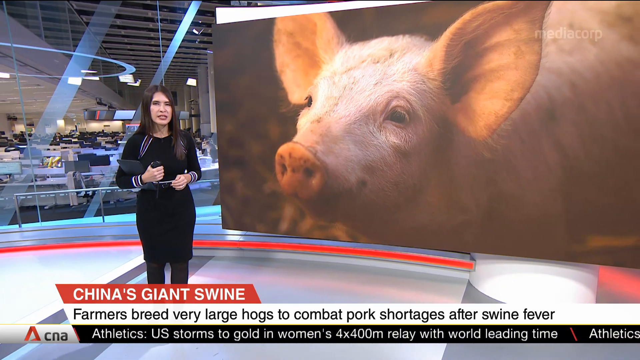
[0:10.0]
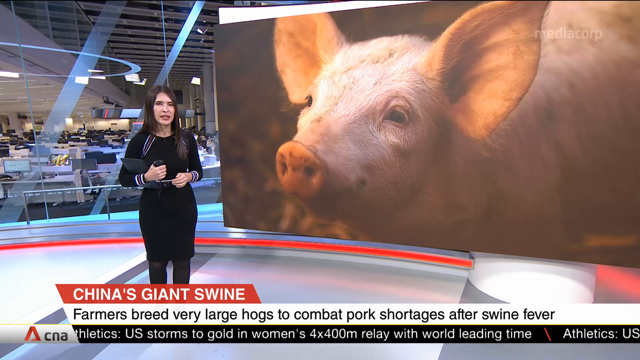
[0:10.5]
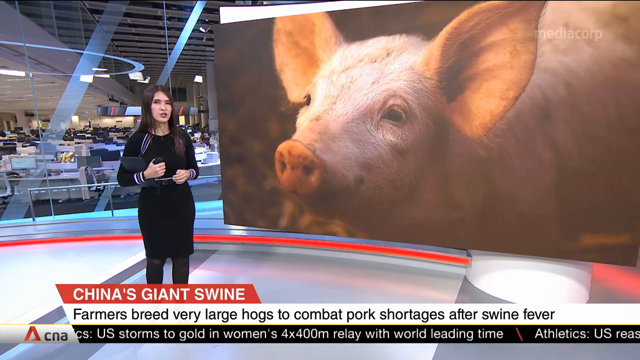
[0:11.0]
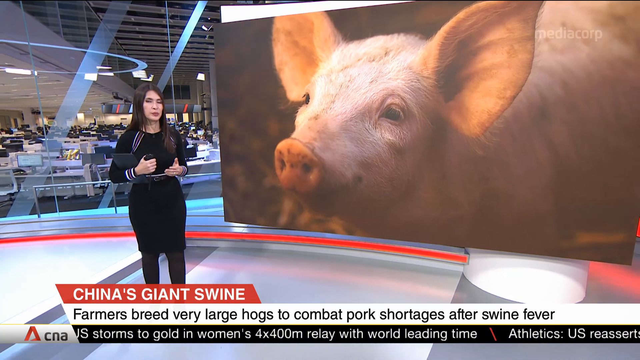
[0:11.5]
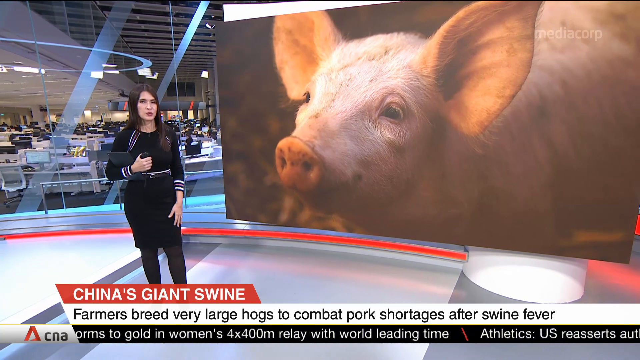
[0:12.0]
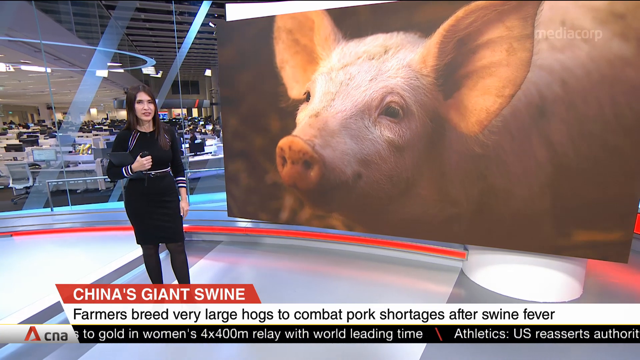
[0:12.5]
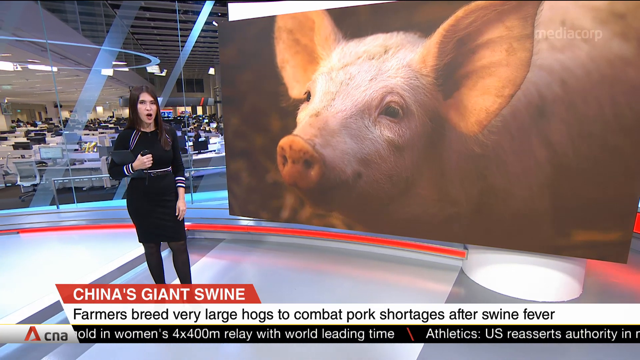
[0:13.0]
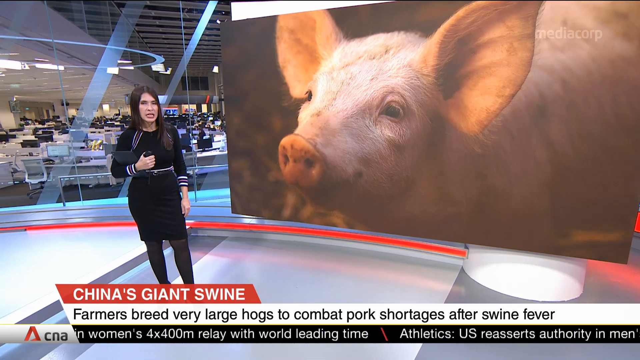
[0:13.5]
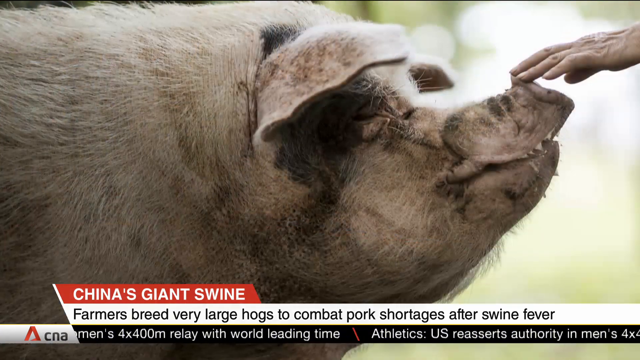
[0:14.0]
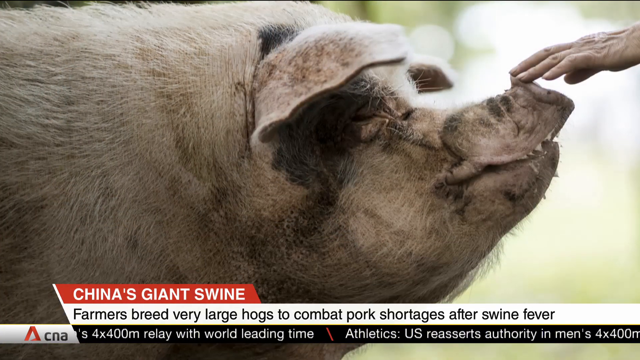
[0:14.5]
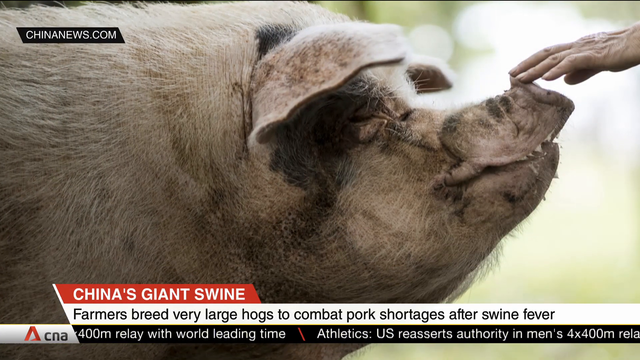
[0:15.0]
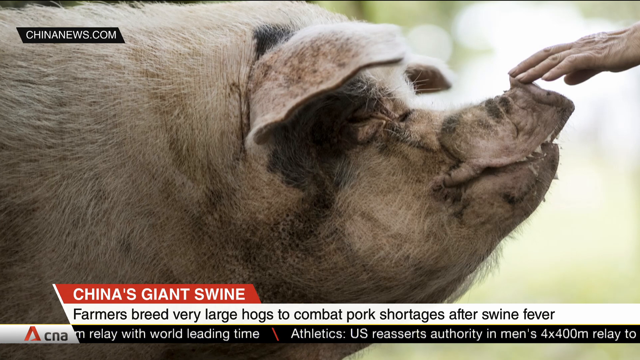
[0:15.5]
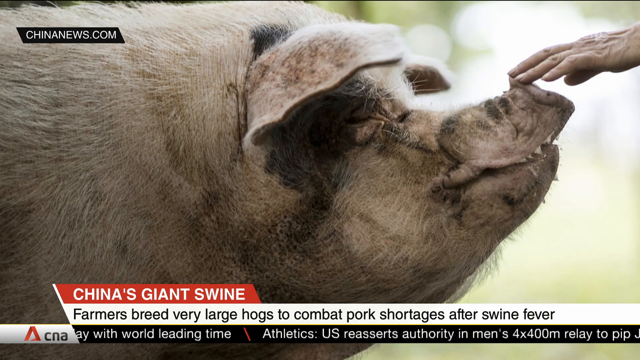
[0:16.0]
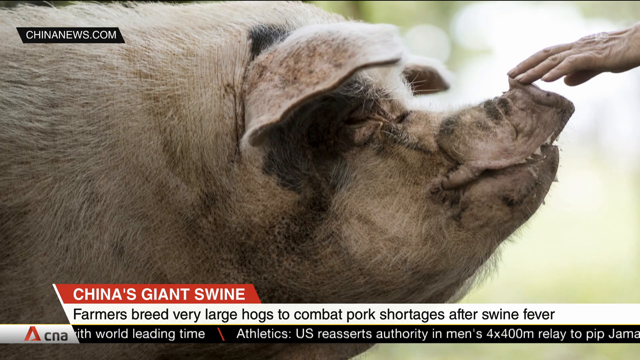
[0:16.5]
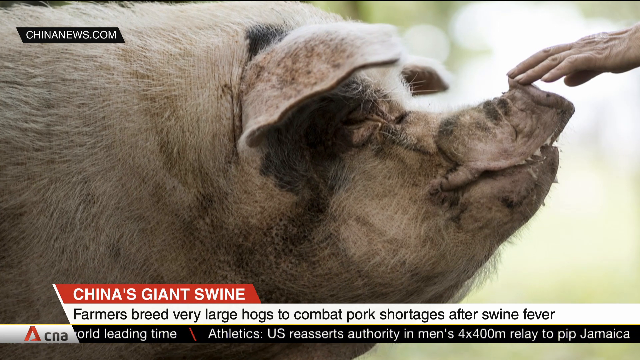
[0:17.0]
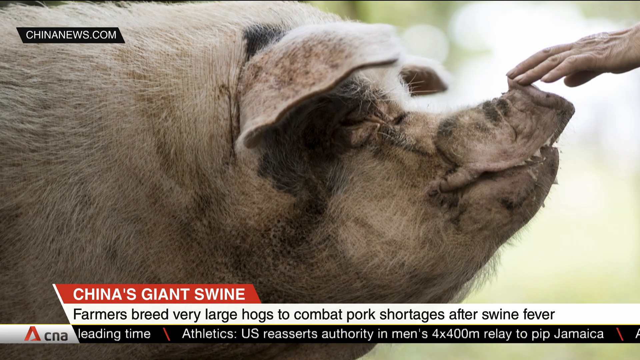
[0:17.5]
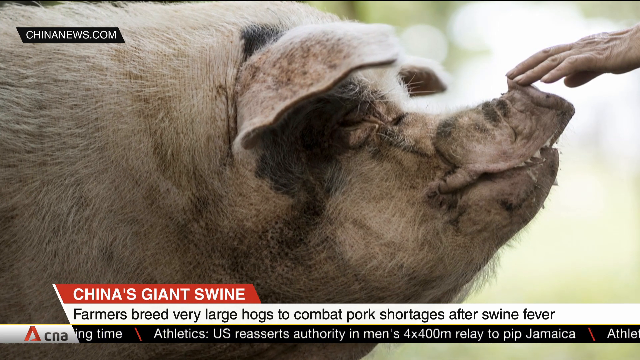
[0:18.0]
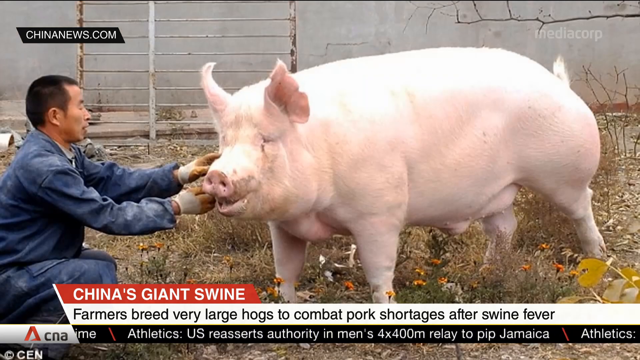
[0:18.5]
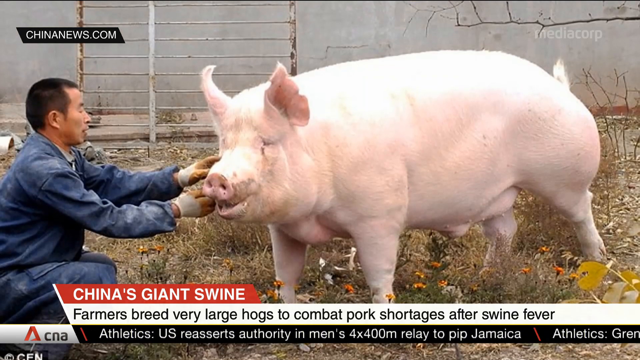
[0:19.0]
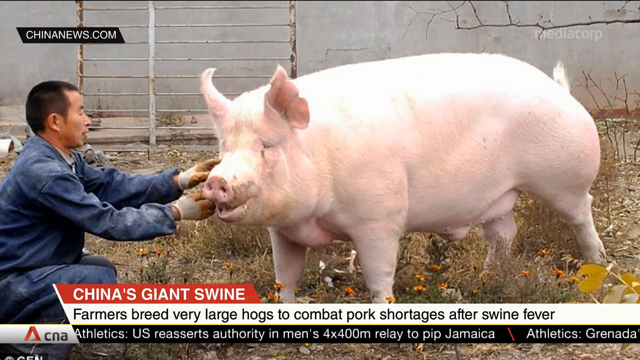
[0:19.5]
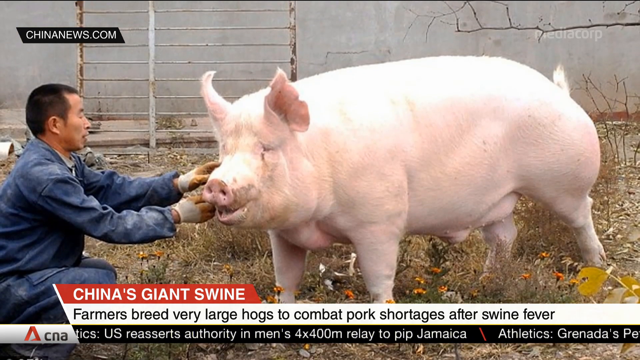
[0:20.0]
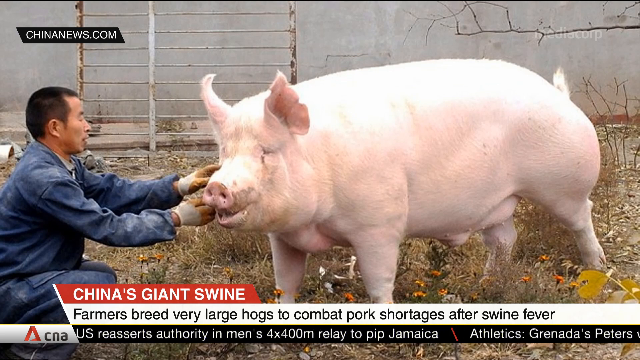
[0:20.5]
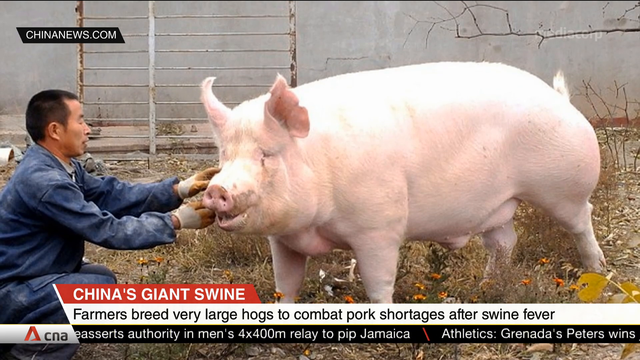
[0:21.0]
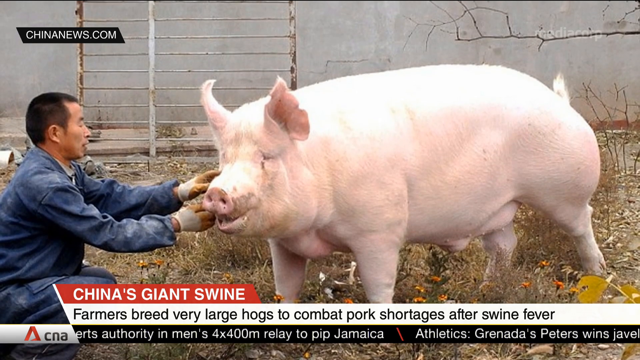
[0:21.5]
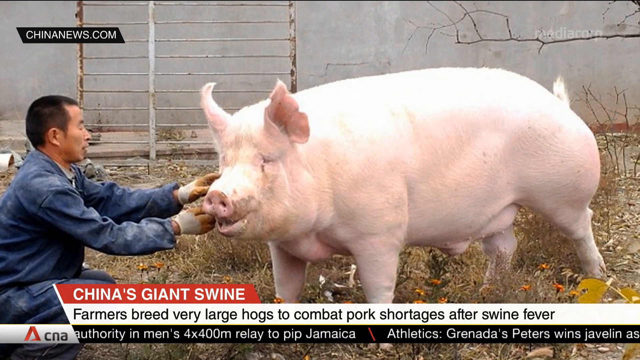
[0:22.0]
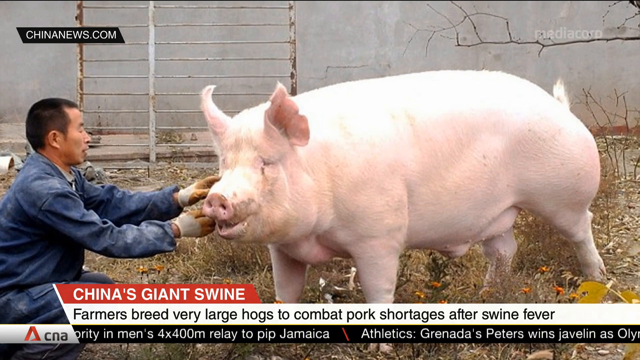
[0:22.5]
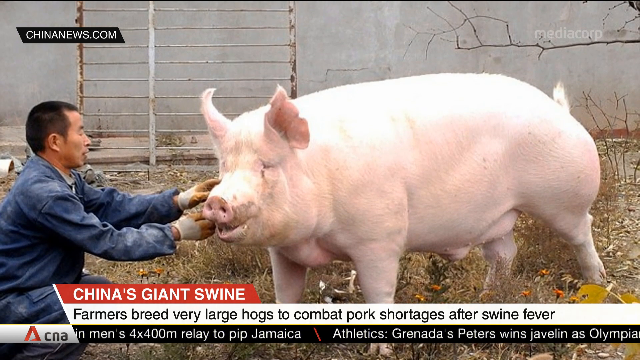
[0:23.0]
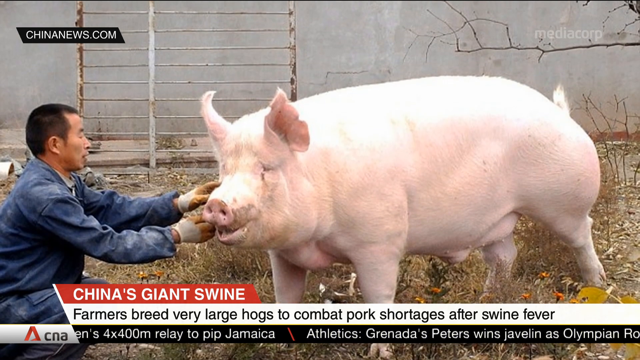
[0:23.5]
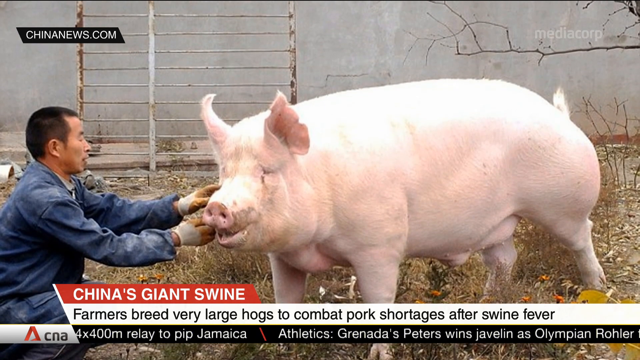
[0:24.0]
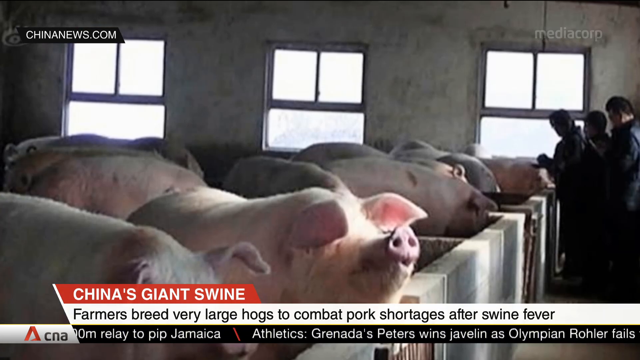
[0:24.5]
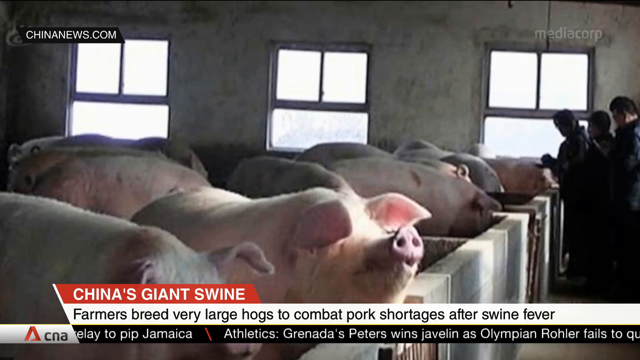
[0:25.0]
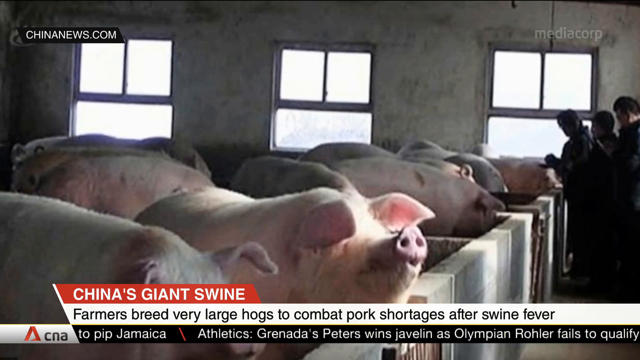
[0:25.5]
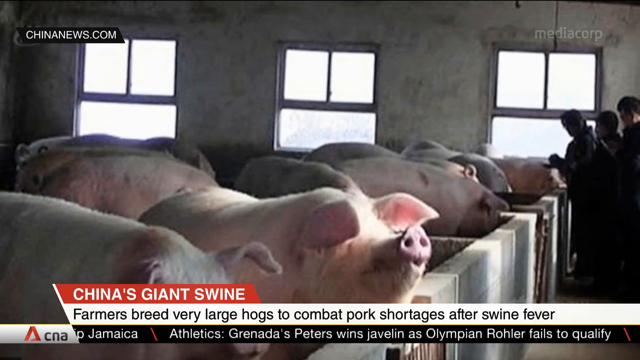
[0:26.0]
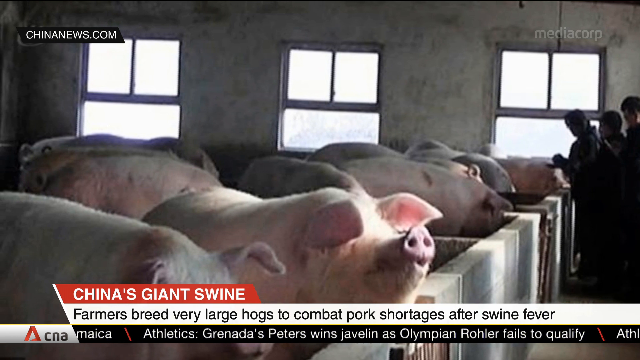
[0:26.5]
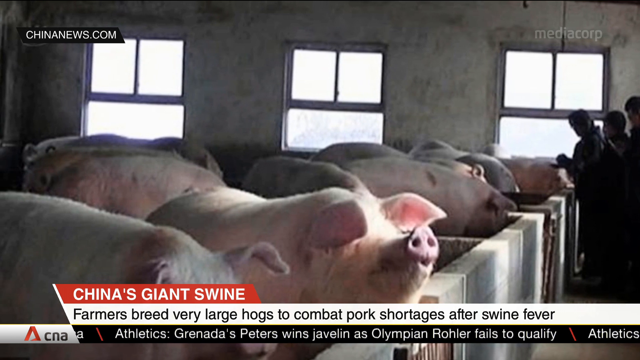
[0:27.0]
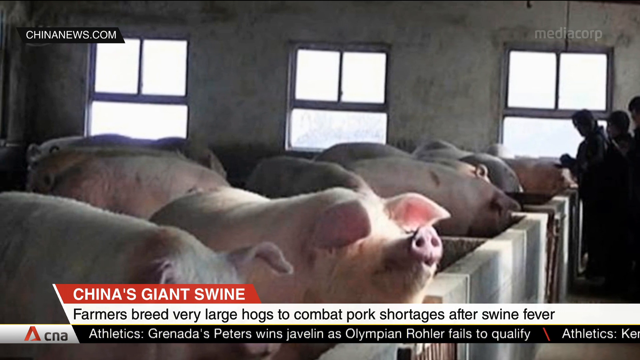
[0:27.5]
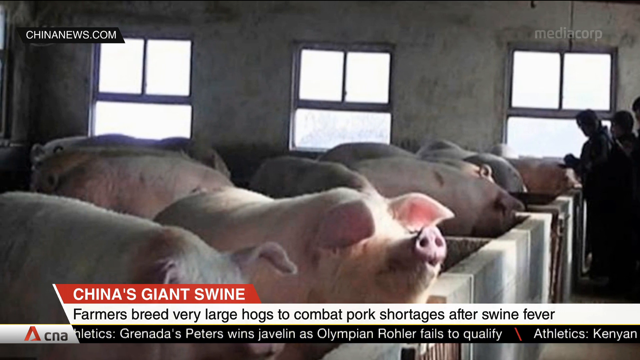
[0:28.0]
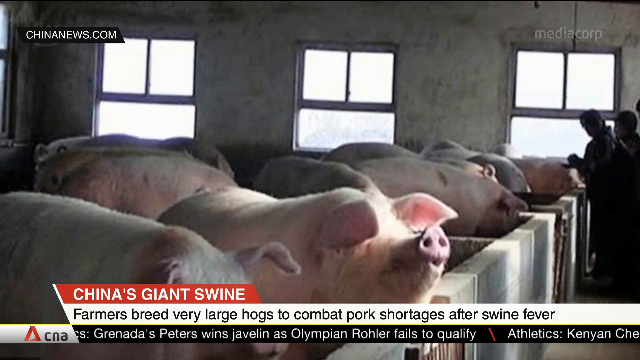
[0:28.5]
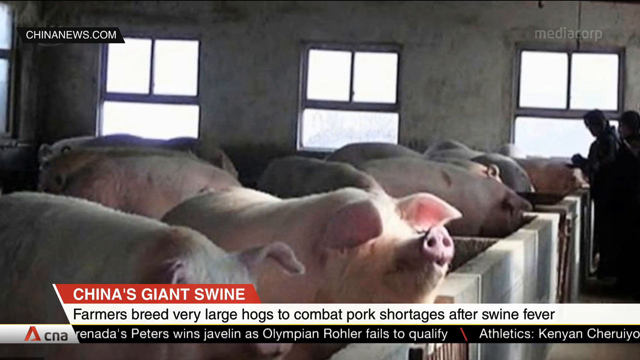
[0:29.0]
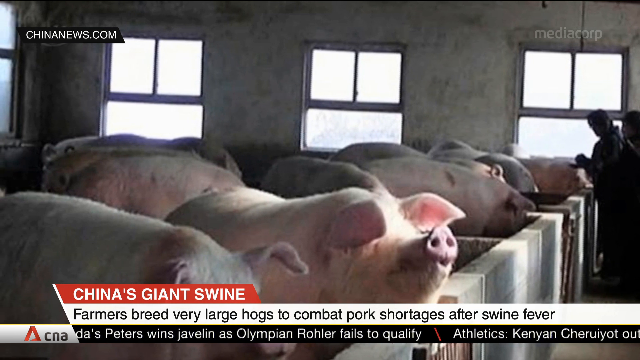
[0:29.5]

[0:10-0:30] The same picture of the pig is shown, an ugly pig, and a human hand is holding it. A clean, nice-looking pig then appears. A man is holding the pig, and there are many pigs in one place.